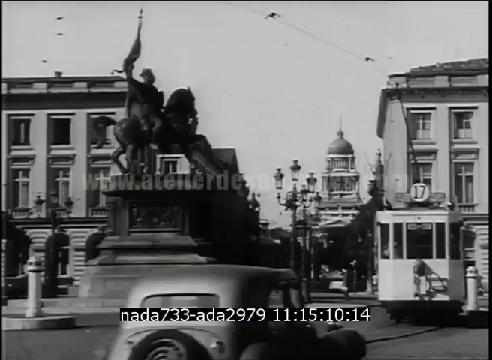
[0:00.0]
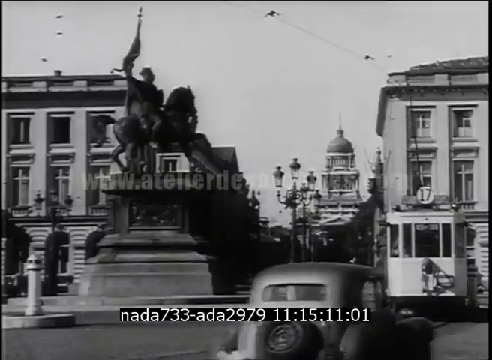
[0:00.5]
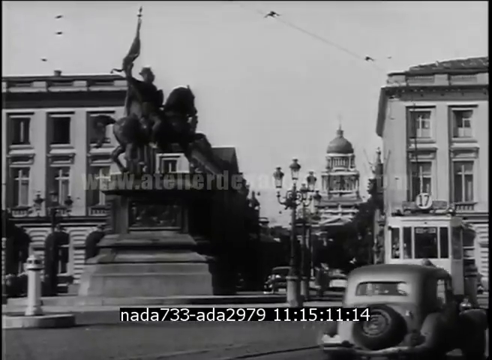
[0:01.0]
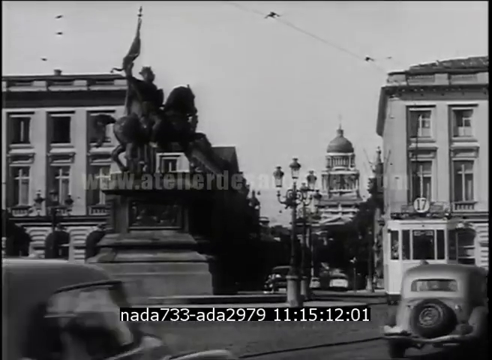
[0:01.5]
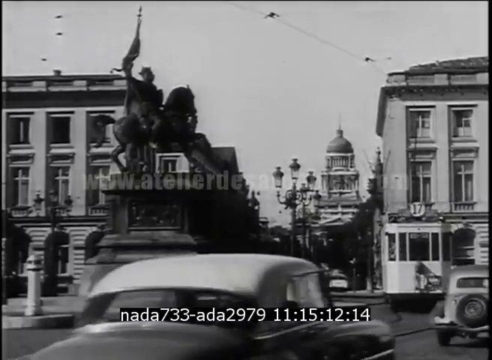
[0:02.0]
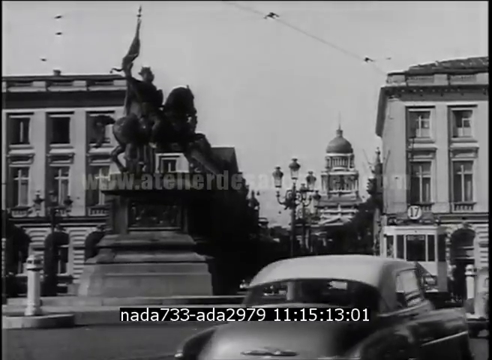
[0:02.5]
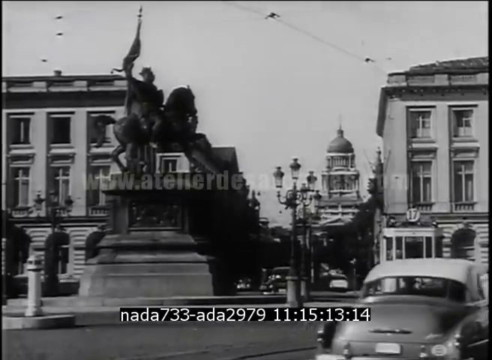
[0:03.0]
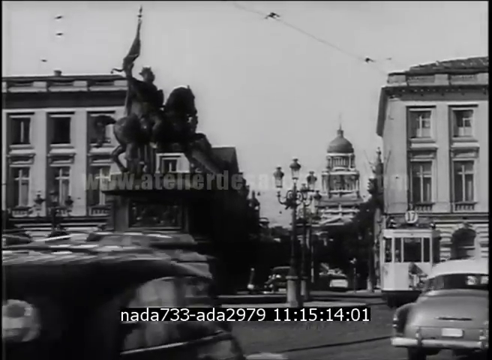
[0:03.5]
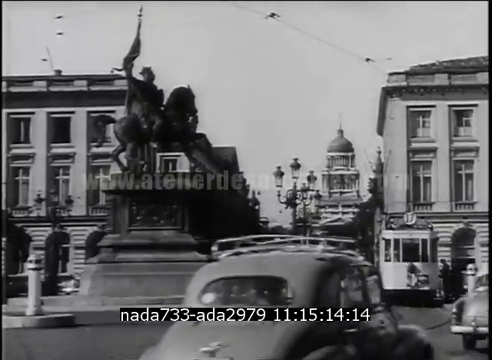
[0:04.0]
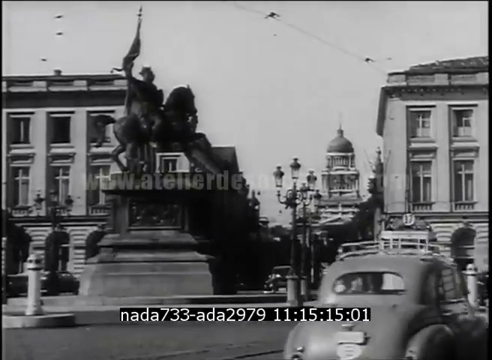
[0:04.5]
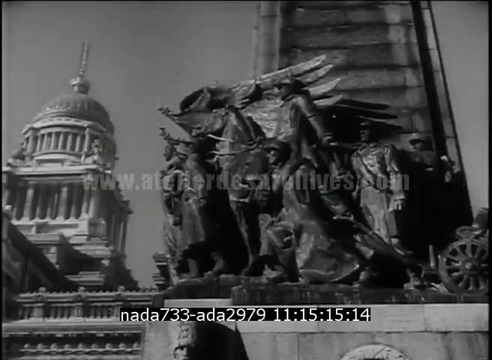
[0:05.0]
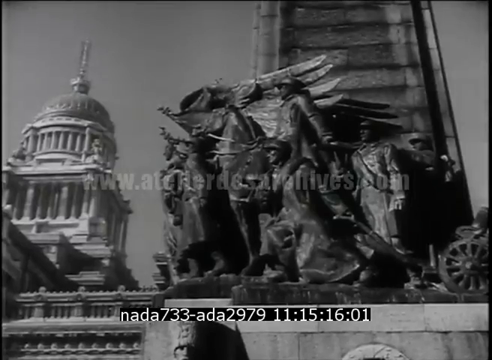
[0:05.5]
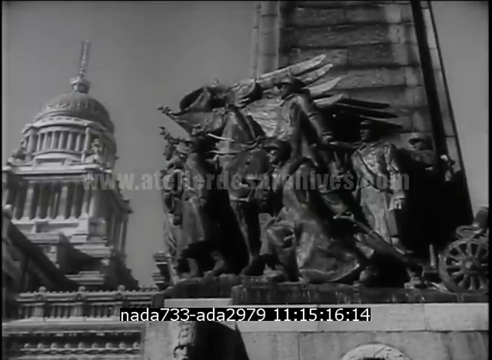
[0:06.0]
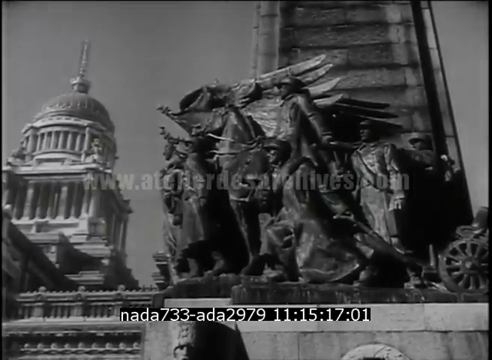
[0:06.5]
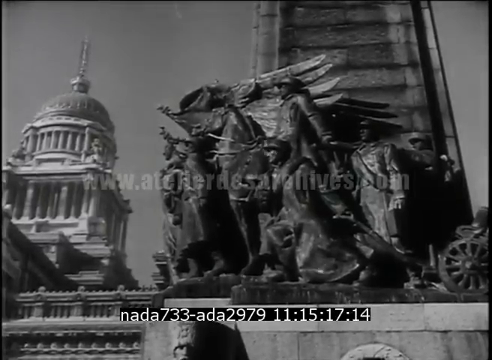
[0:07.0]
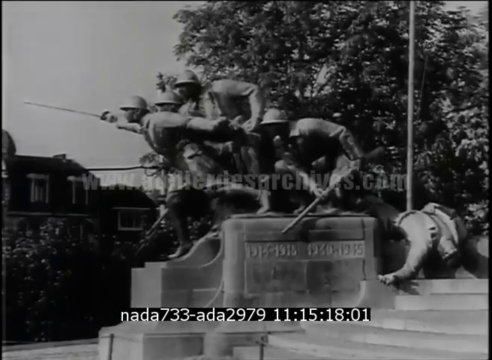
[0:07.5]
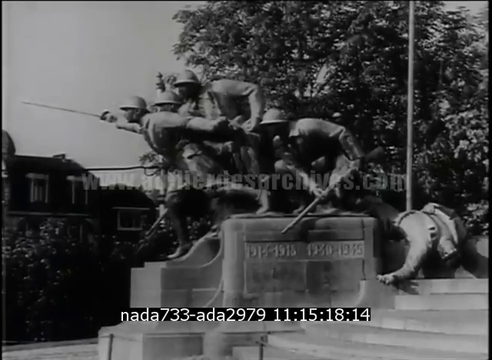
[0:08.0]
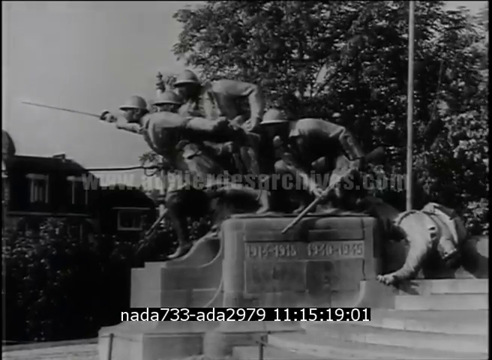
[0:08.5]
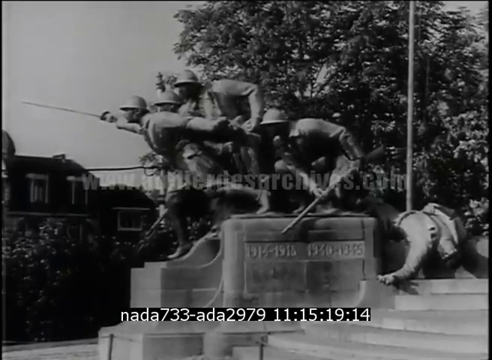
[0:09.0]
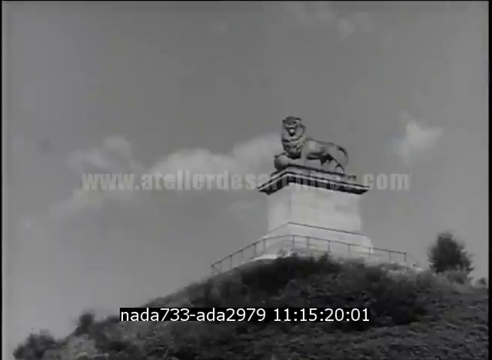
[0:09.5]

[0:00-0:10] A black and white video shows a city scene. Several cars drive through the scene, and a timestamp in white letters against a black background appears at the bottom of the screen. The sky looks overcast, and there is a statue along with several light posts. A couple of statues of men appear to be engaged in battle, and another statue on top of a hillside is hard to make out. A trolley is also visible.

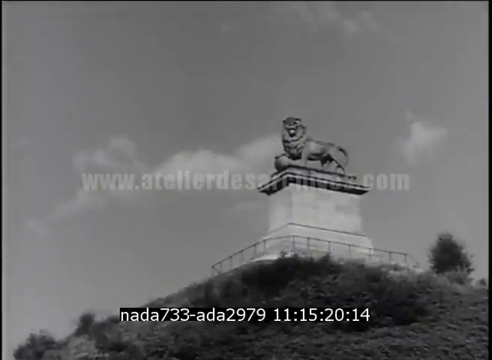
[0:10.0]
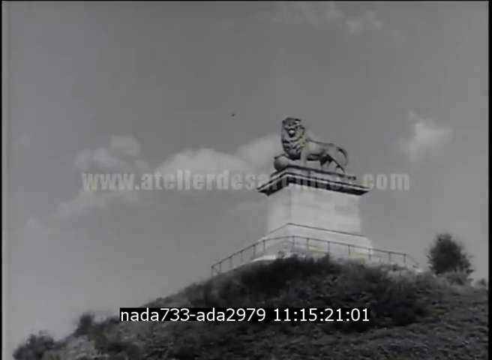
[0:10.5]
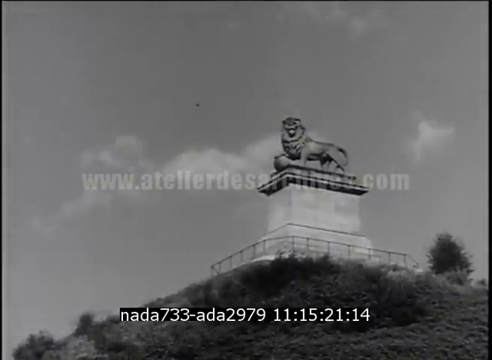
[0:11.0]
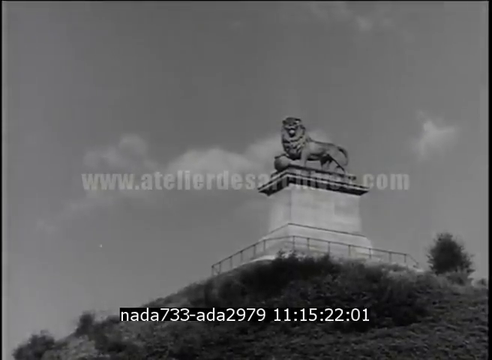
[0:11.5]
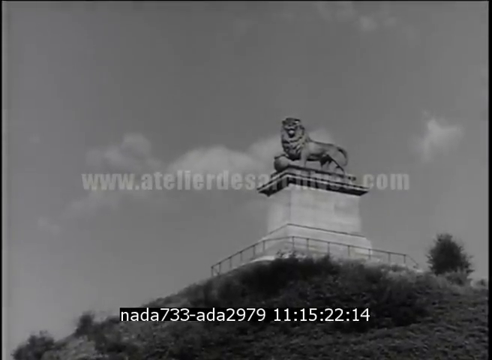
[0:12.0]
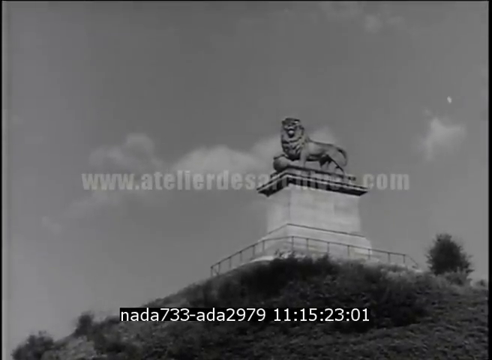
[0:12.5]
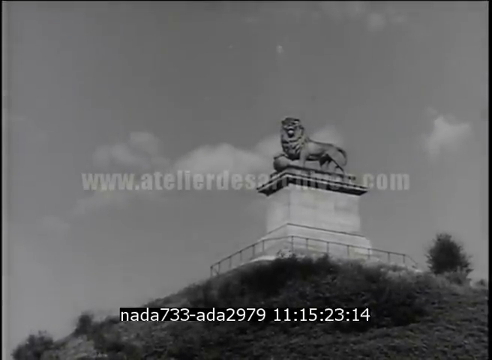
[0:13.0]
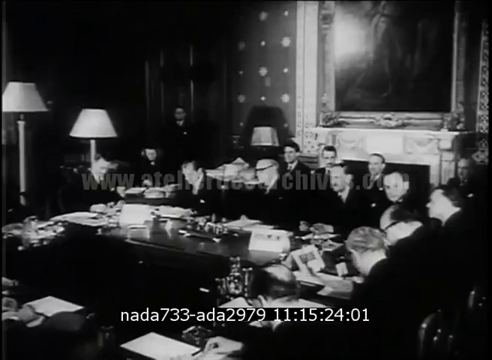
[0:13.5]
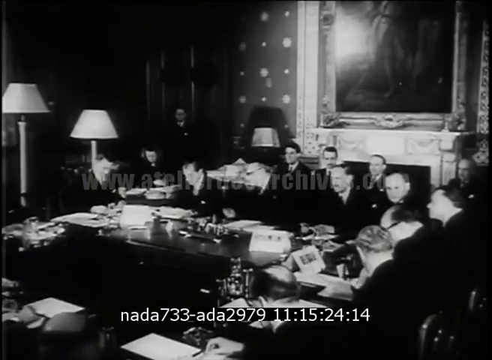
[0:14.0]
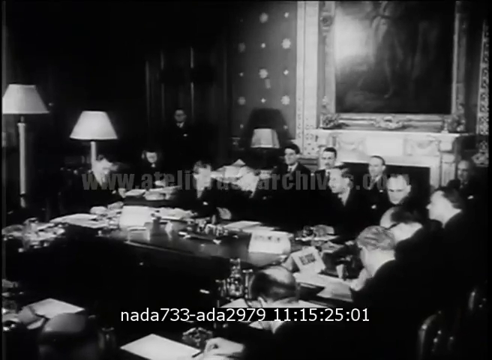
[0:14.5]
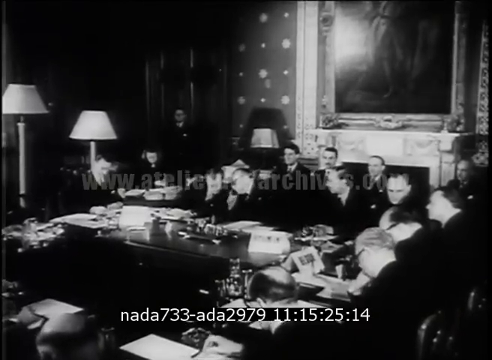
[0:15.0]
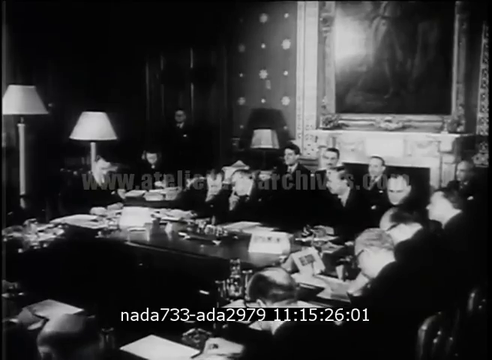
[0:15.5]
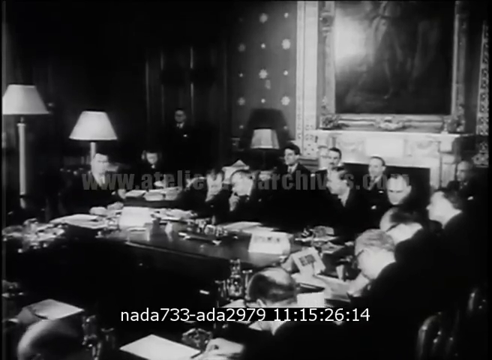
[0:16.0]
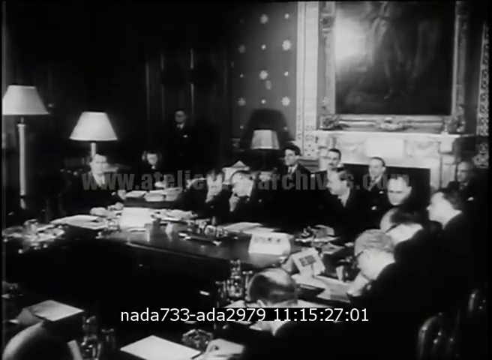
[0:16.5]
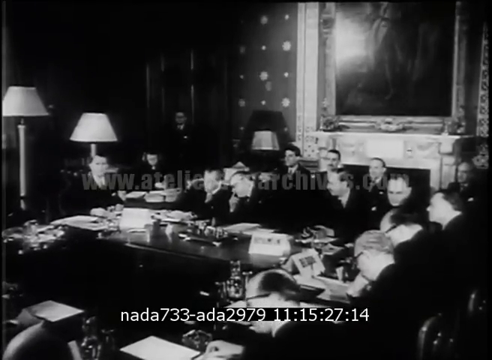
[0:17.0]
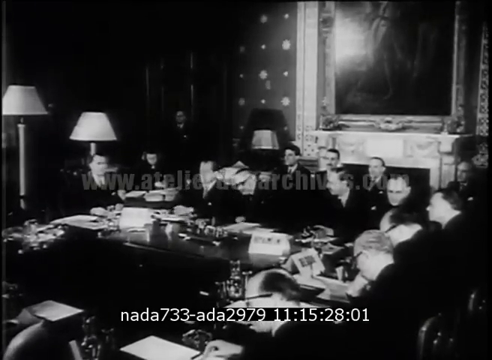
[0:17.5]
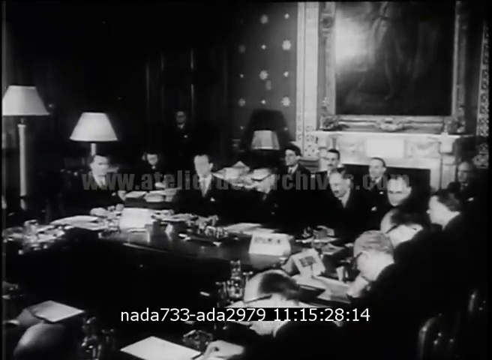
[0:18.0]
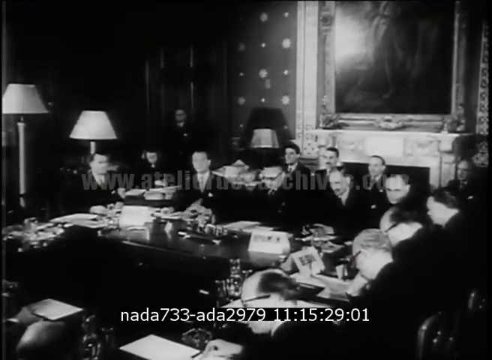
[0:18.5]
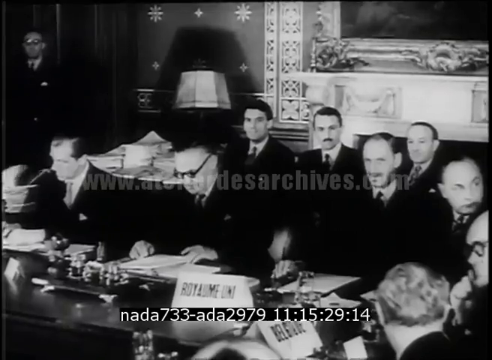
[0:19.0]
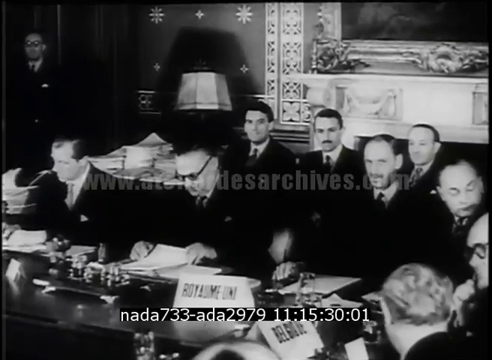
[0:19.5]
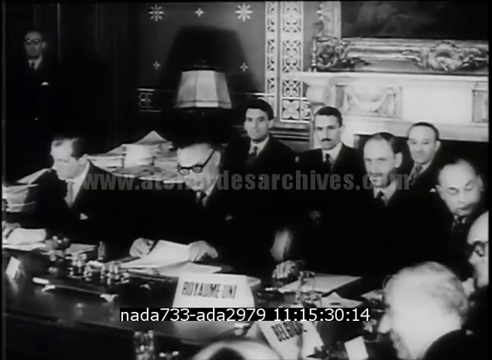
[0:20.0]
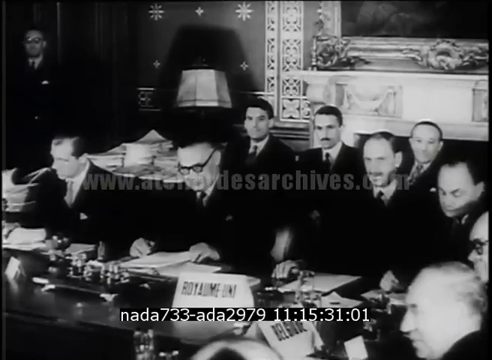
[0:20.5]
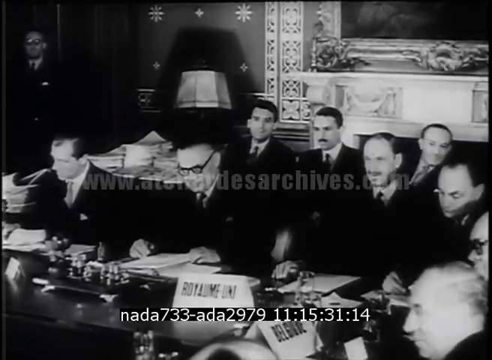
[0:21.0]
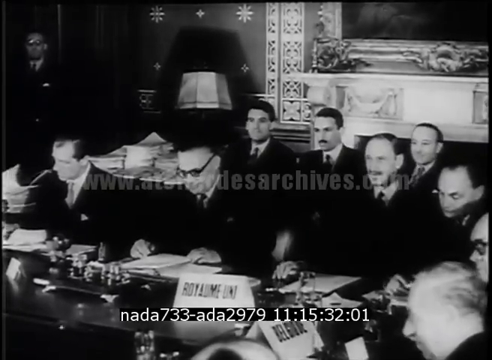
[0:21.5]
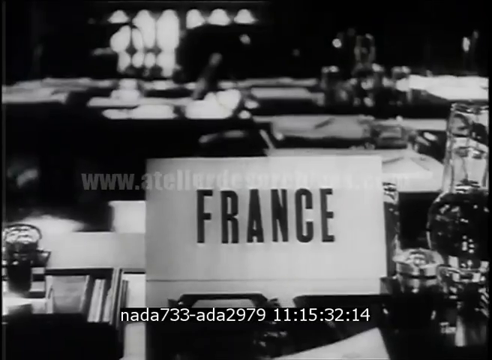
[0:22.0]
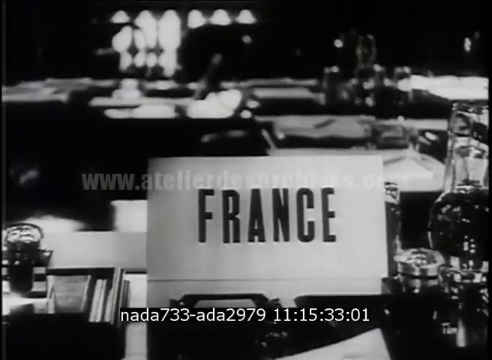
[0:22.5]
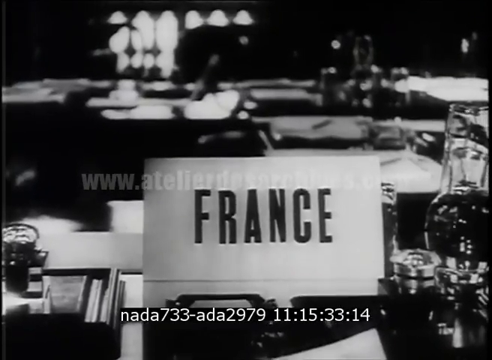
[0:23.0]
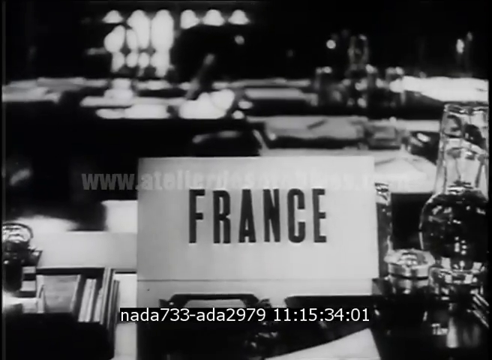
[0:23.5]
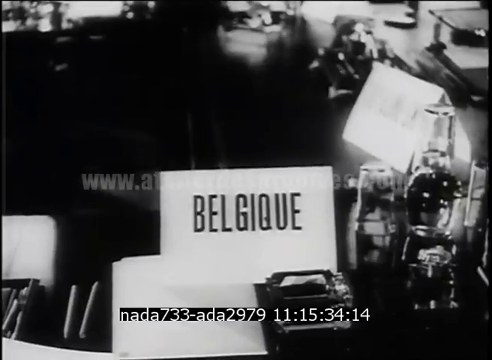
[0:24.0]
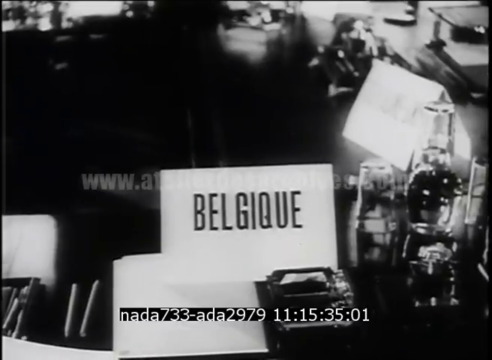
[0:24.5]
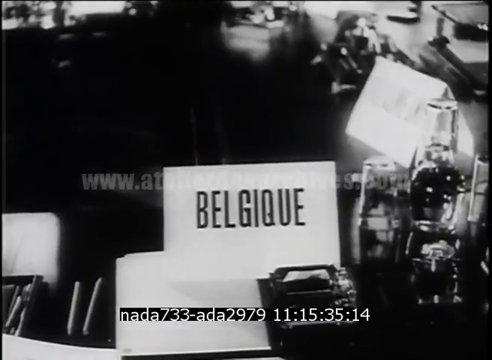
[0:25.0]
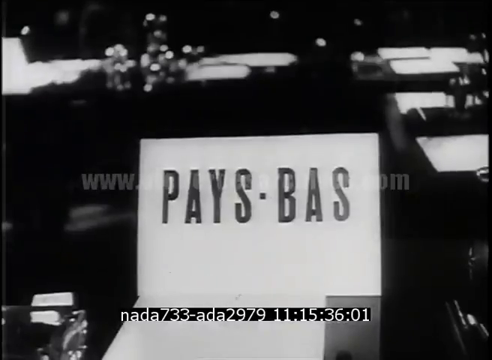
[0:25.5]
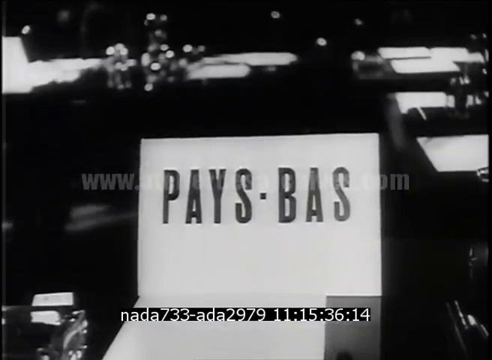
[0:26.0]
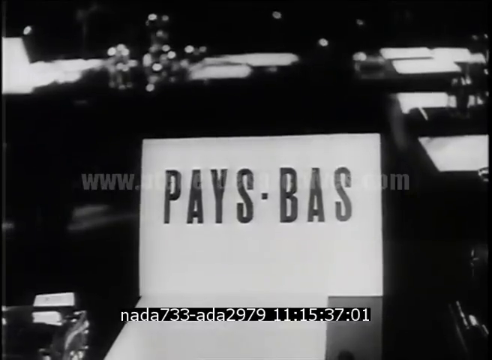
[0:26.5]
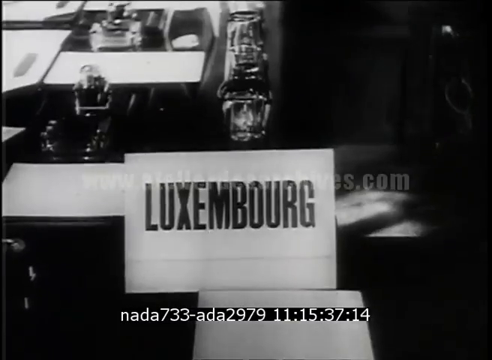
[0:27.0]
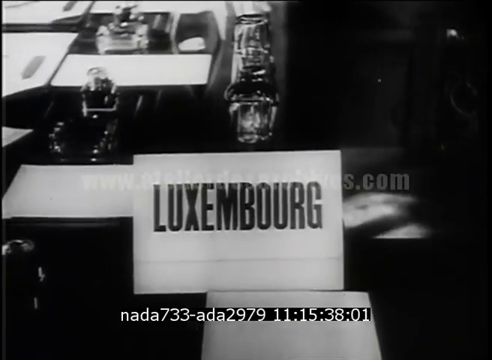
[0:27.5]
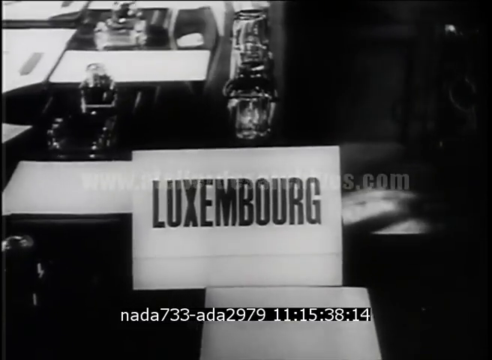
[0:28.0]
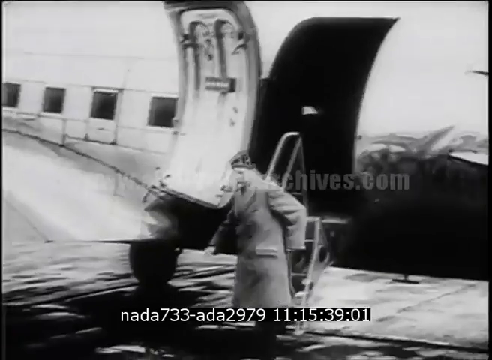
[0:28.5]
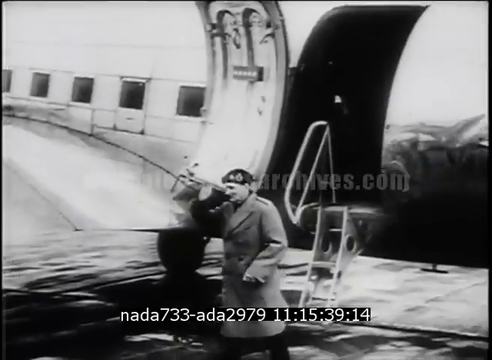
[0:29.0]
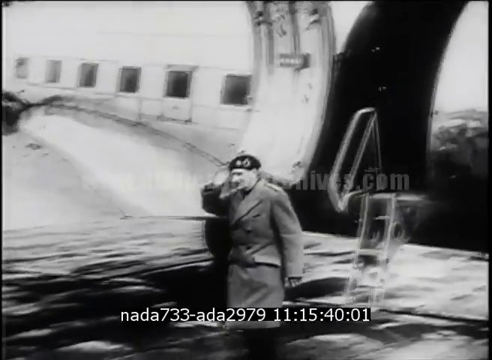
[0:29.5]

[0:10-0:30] A statue of a lion stands on top of a big pedestal on top of a hill, with some clouds in the sky behind it and a small fence around the pedestal. The scene changes to a big fancy room where several men are sitting around a desk, talking and going over some important documents. Some of them wear glasses, they have short hair, and one of them has a mustache and dark hair. The wallpaper has several white dots on it, and a large framed painting hangs in the back of the room. A piece of paper shows the word "France" in all capital black letters, and a couple of glass objects are on the desk. The word "Belgique" then appears, also in black letters, followed by the words "Pays Bas Luxembourg". A man then steps off a plane with an open door and several windows.